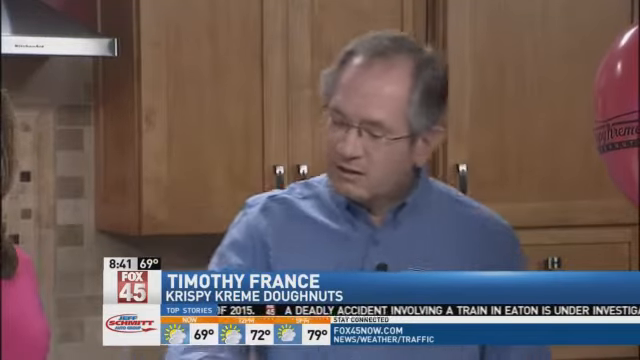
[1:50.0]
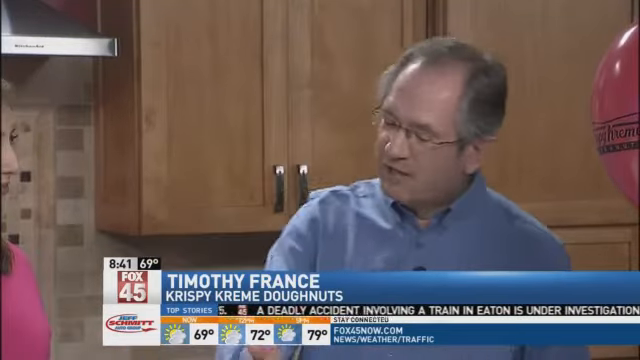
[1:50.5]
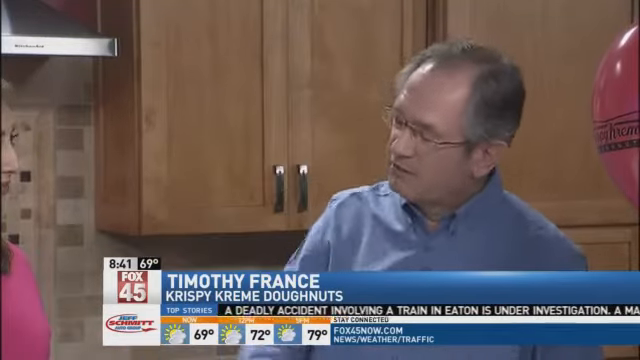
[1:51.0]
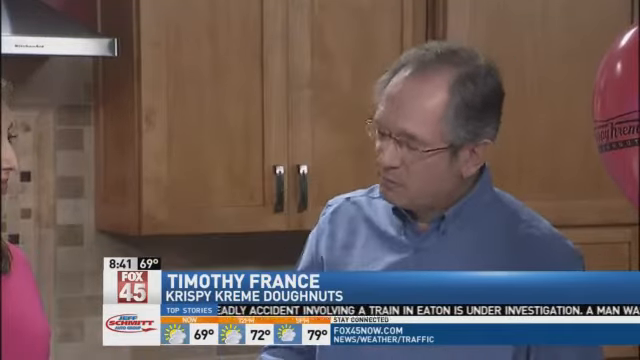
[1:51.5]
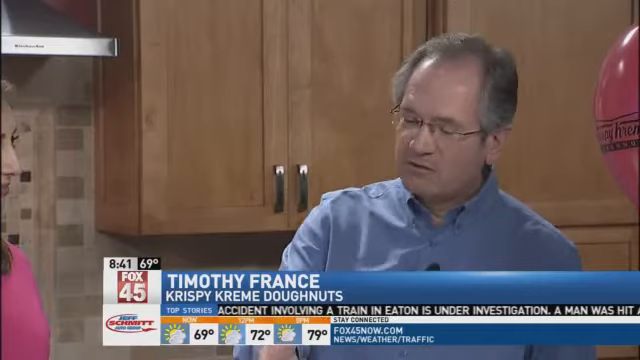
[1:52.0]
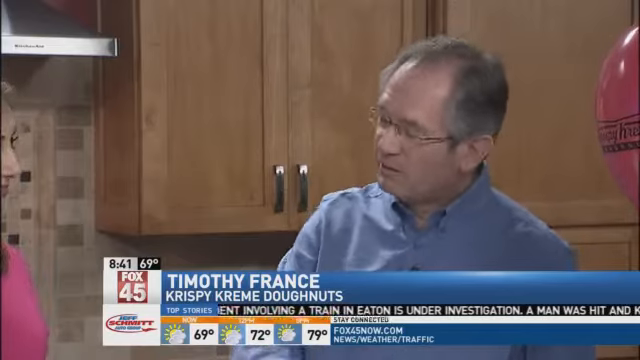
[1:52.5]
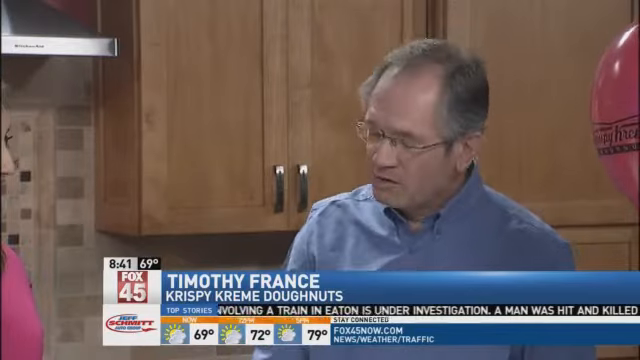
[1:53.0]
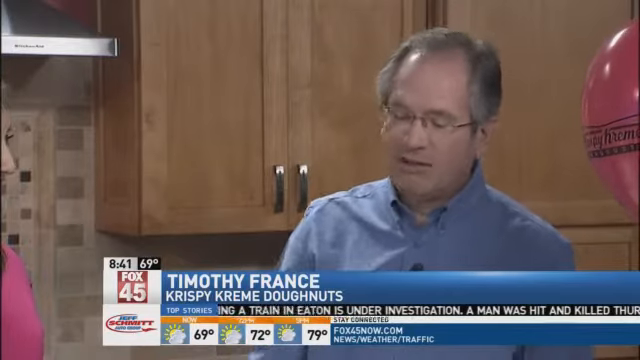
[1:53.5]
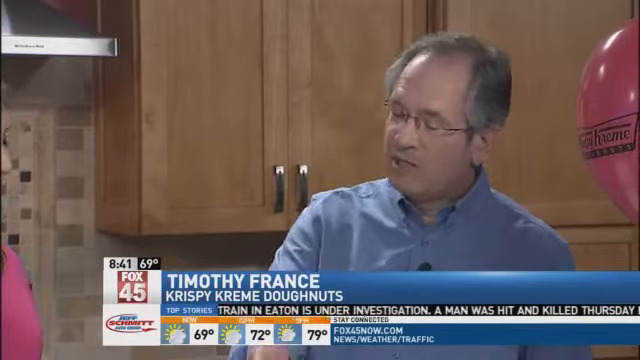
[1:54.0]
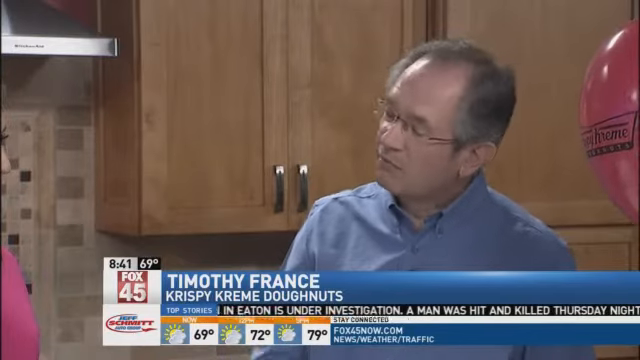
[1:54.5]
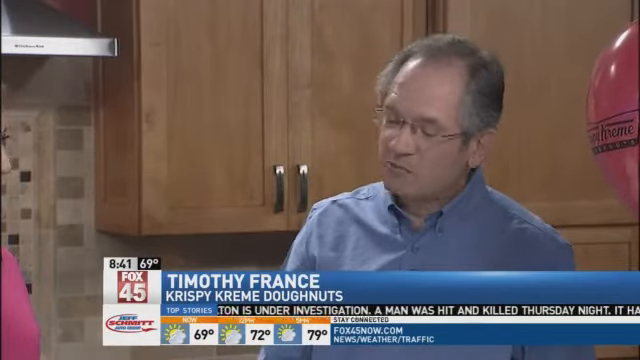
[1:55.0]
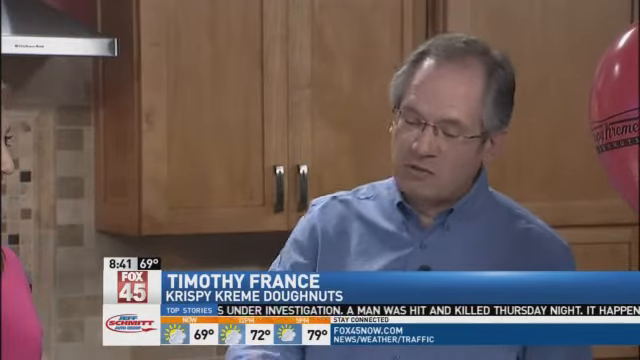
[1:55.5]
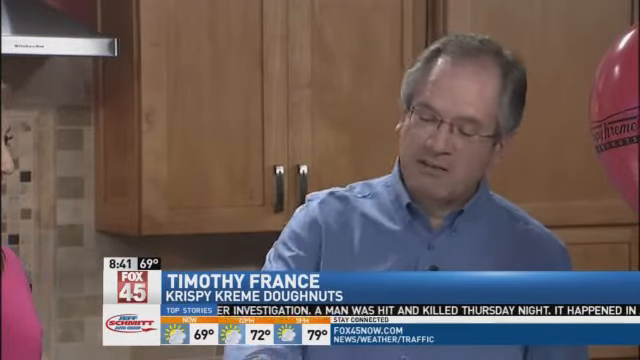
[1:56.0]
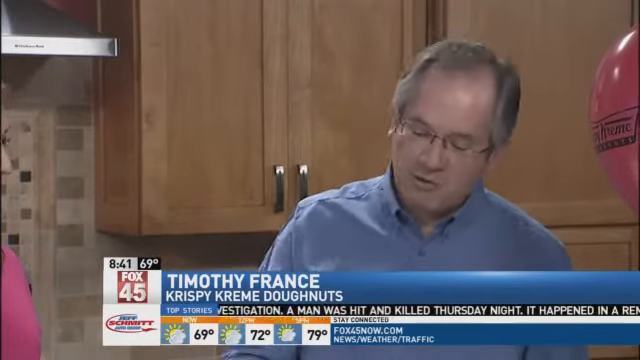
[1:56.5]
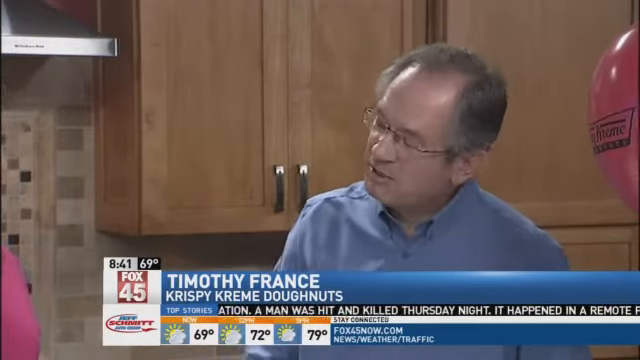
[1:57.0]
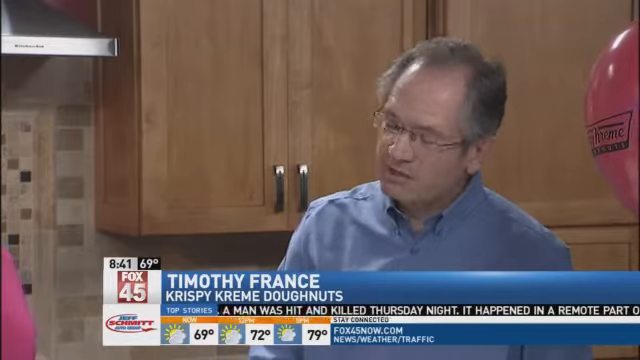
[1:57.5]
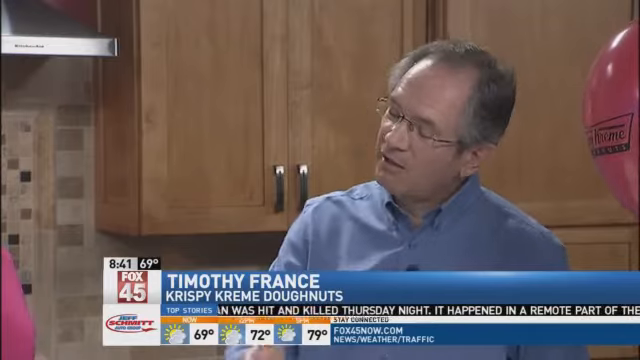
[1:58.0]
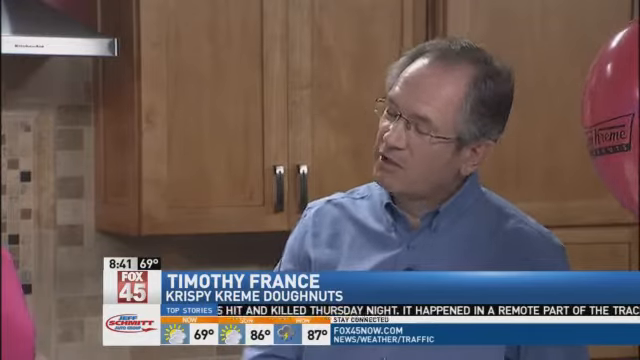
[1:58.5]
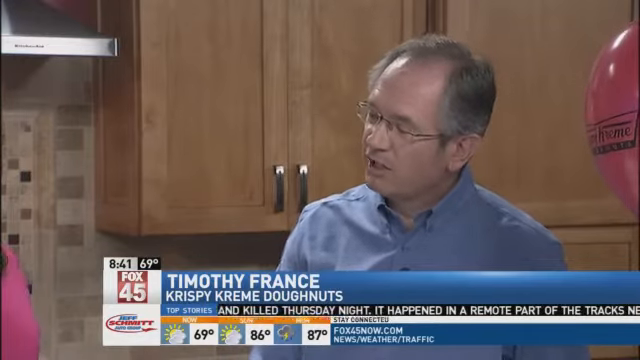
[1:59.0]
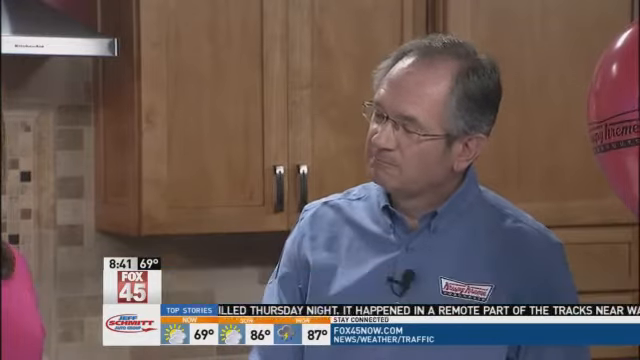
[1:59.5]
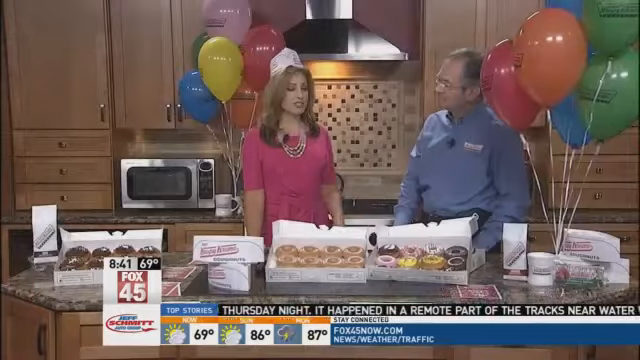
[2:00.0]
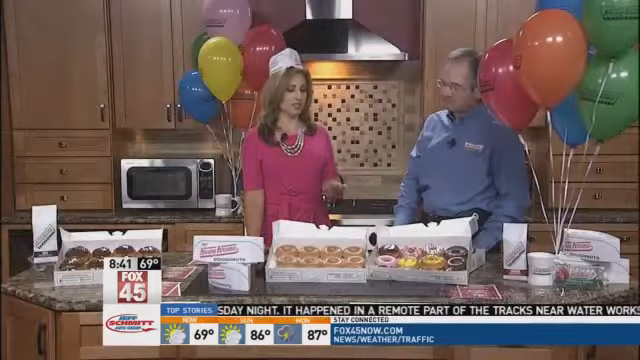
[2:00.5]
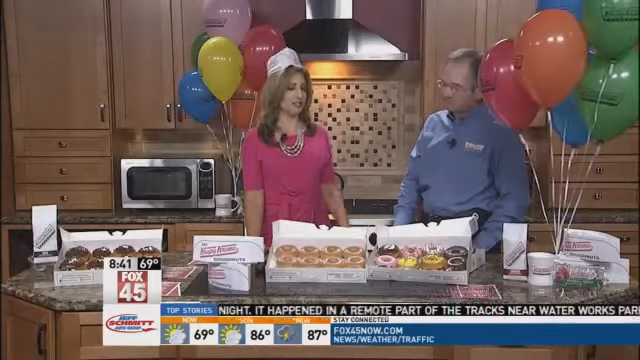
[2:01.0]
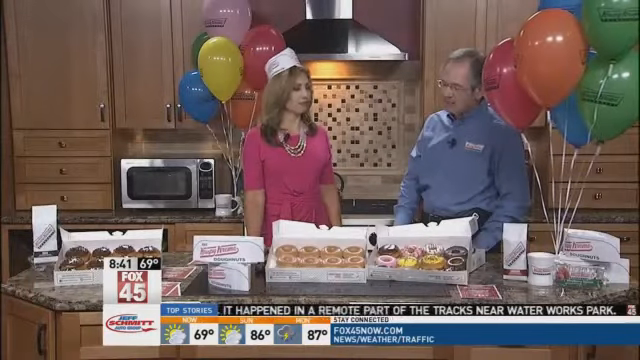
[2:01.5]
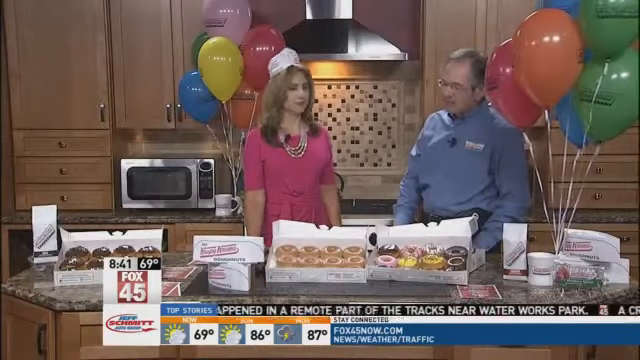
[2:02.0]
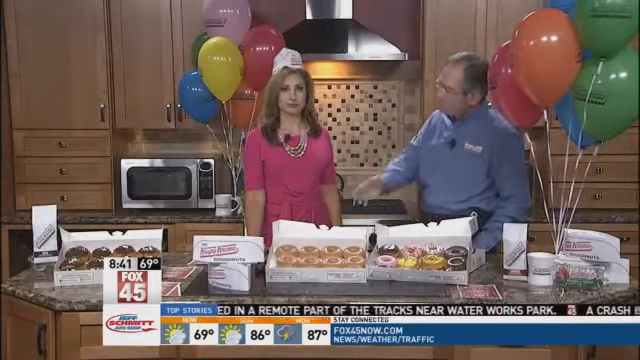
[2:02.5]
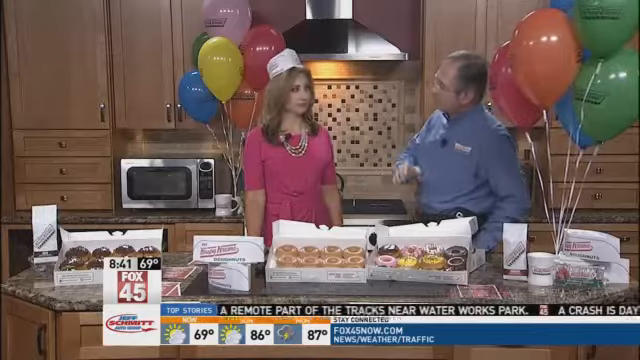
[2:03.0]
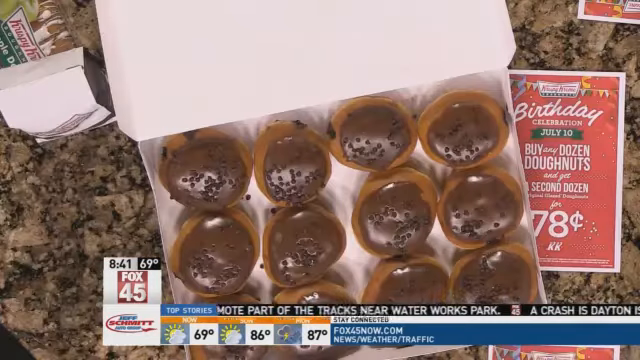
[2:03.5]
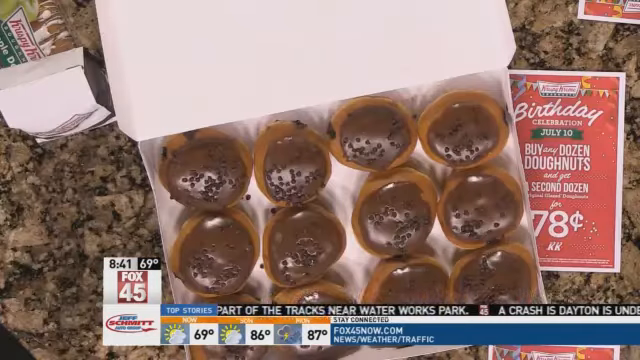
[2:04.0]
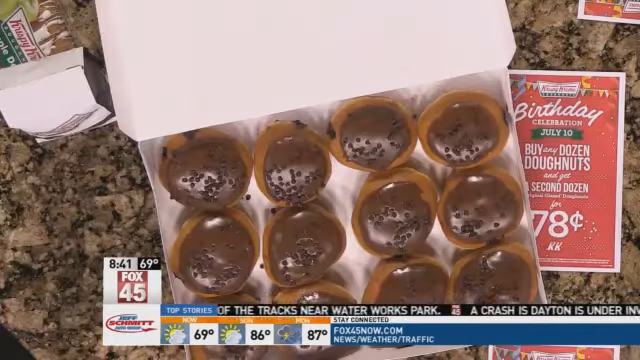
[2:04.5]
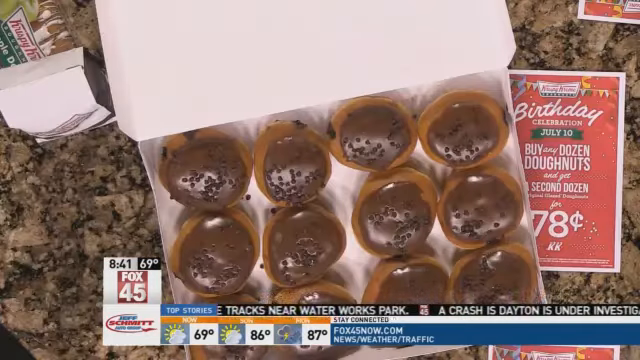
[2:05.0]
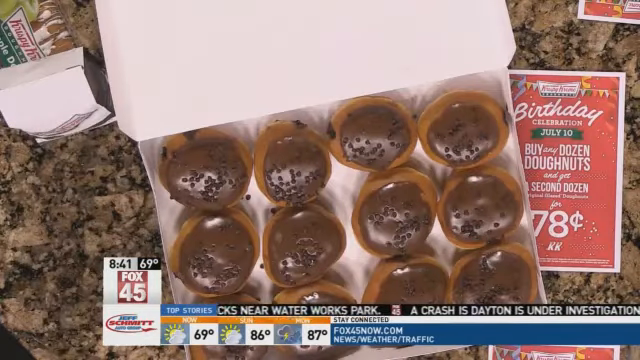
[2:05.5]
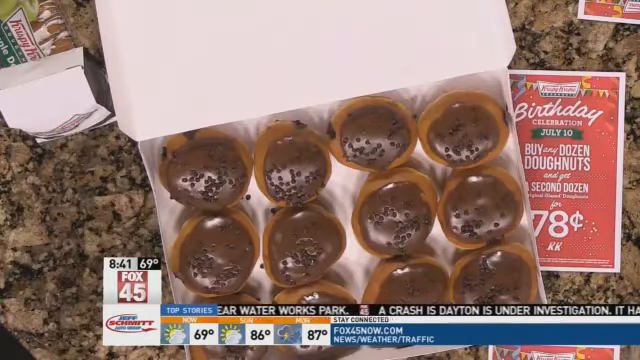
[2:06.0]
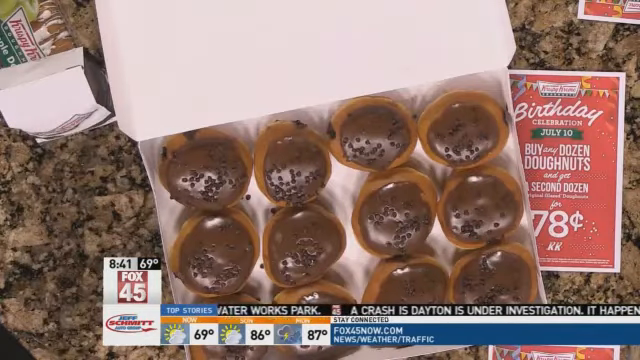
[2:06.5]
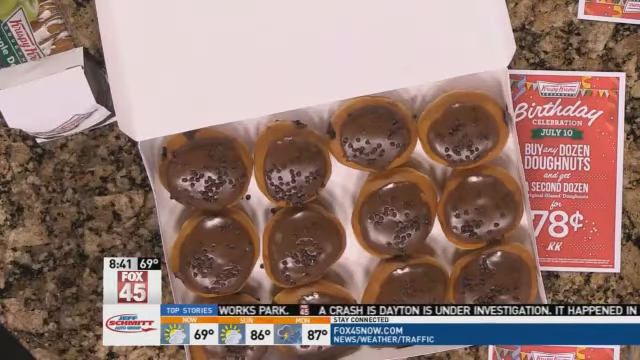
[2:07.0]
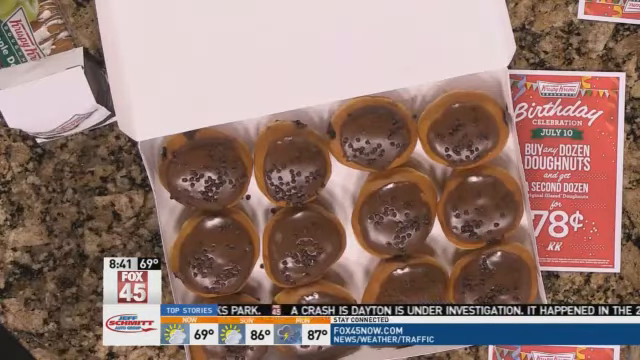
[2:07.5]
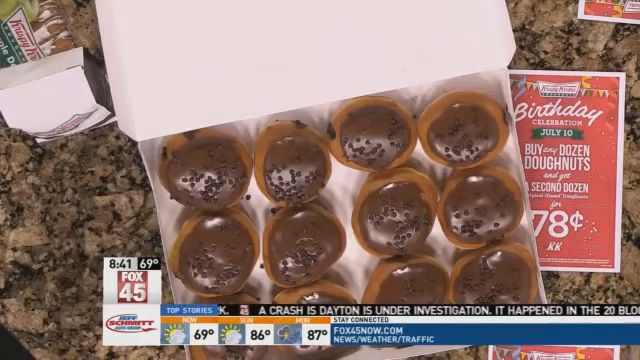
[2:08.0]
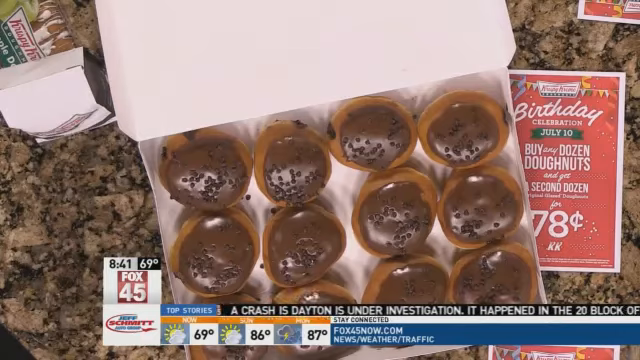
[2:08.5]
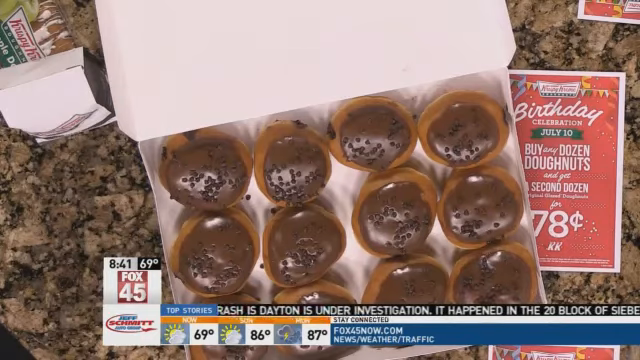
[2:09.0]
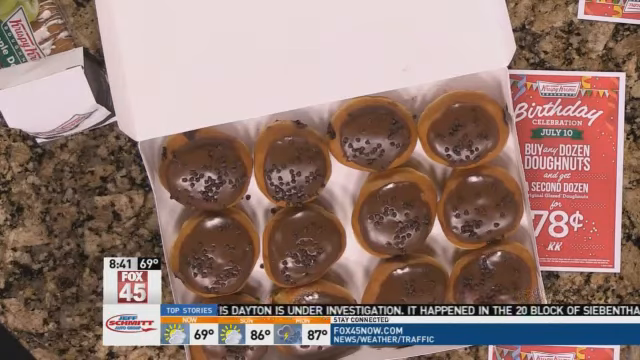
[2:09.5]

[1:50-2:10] The camera angle switches to more of a close-up on him. He still faces toward the reporter rather than the camera, looking down again and gesturing kind of to her and back to the donuts. He kind of quirks his head a little when making a point, and sometimes the ends of his smile curl up just slightly, as if he might be saying something a little humorous. He then purses his lips, and she addresses the donuts, him and the camera, looking back at him and the camera. The angle then switches to look down at a box full of chocolate cream-filled donuts, with an advertisement that reads "Krispy Kreme birthday celebration, July 10th. Buy any dozen donuts and get a second dozen for 78 cents."